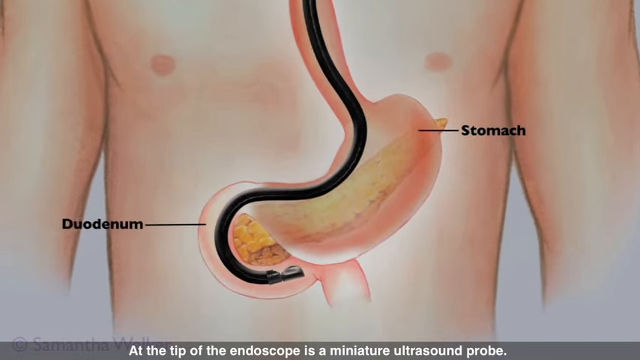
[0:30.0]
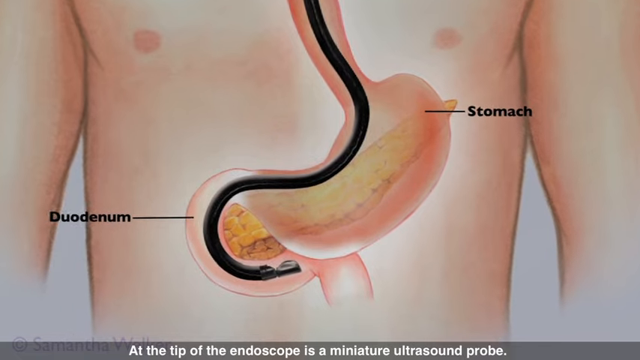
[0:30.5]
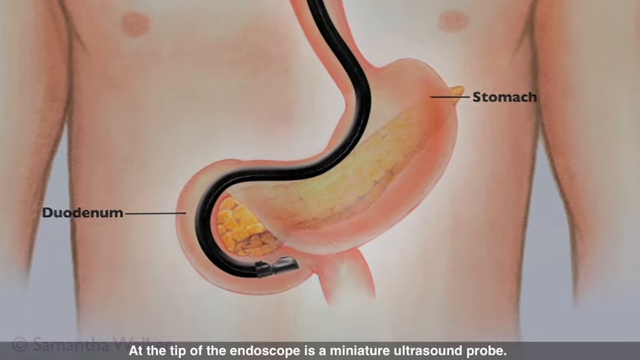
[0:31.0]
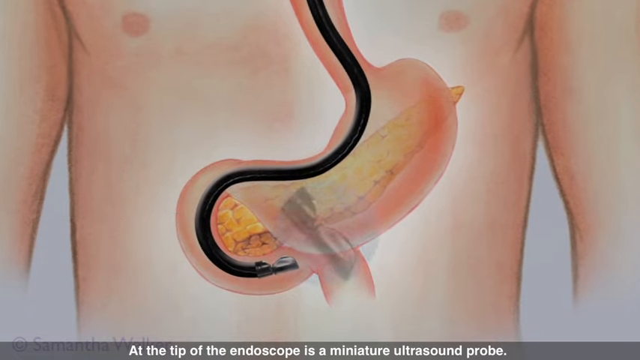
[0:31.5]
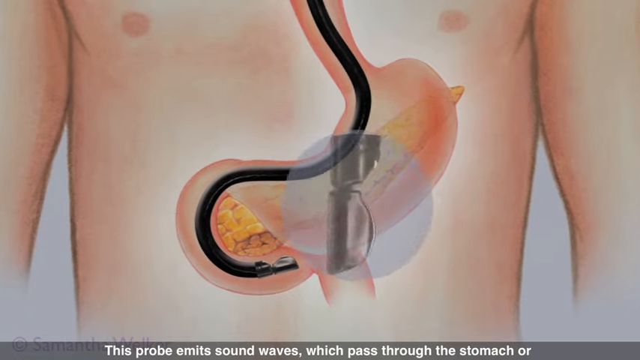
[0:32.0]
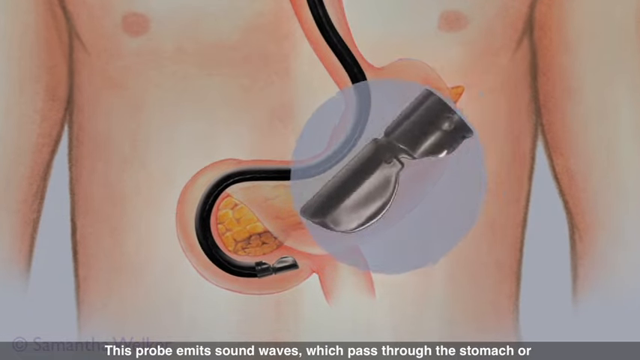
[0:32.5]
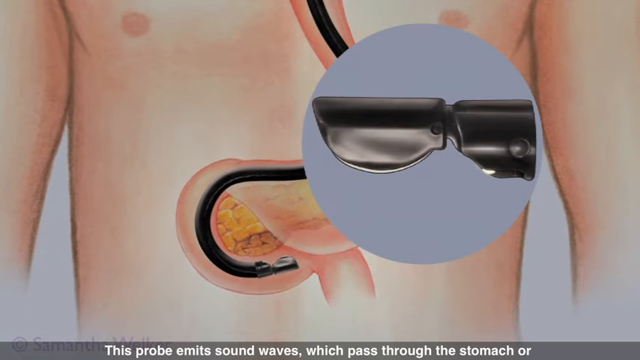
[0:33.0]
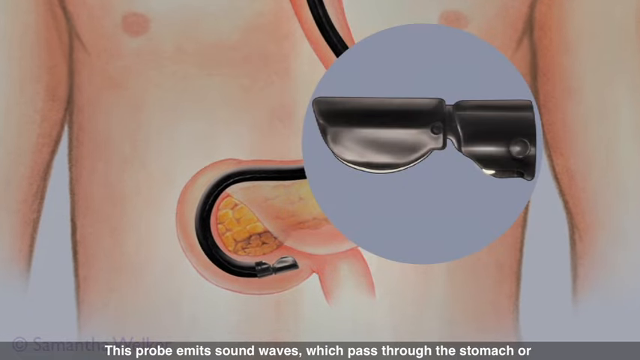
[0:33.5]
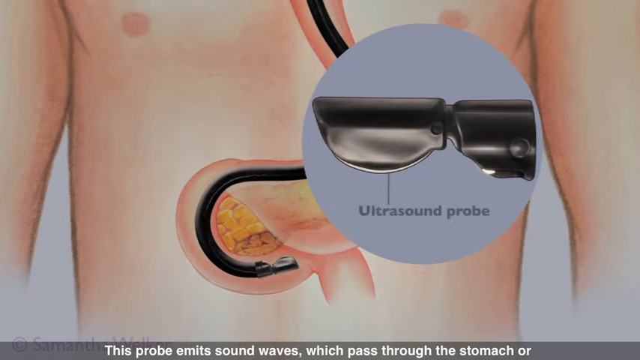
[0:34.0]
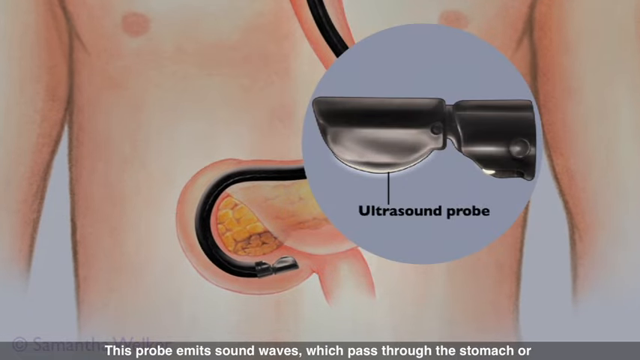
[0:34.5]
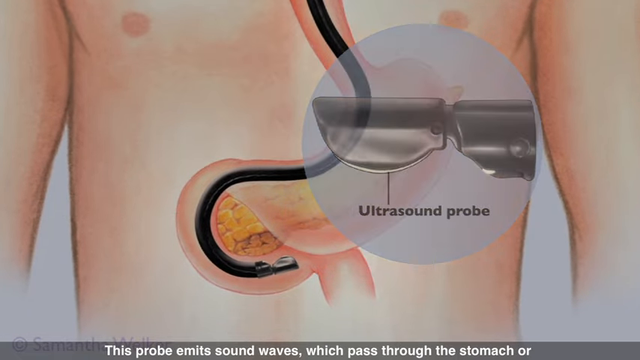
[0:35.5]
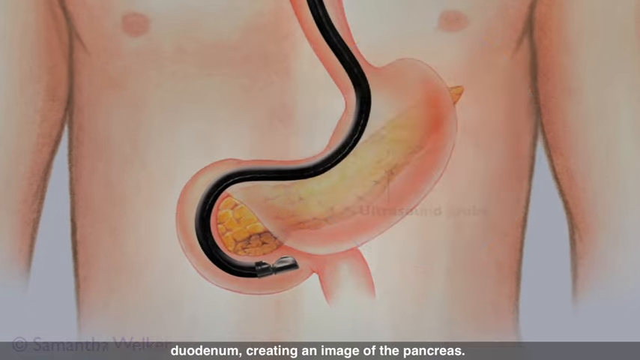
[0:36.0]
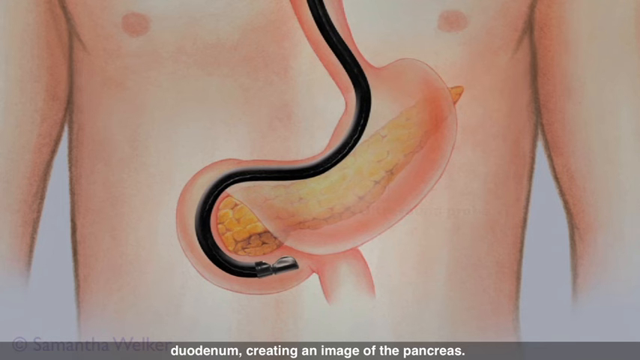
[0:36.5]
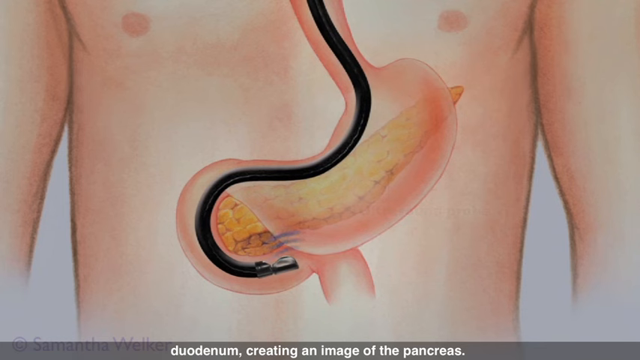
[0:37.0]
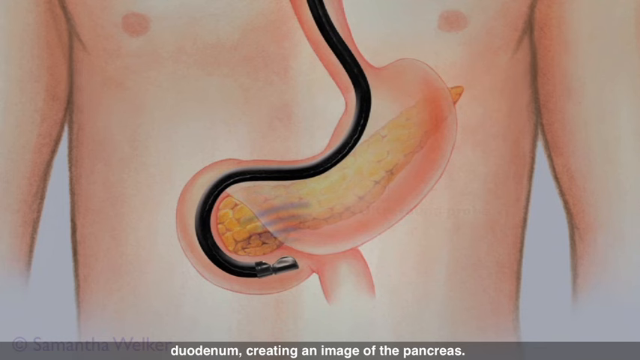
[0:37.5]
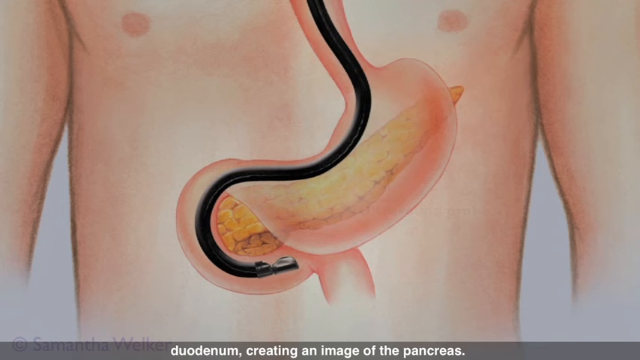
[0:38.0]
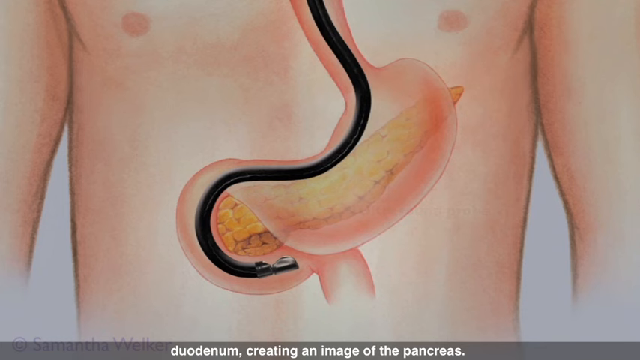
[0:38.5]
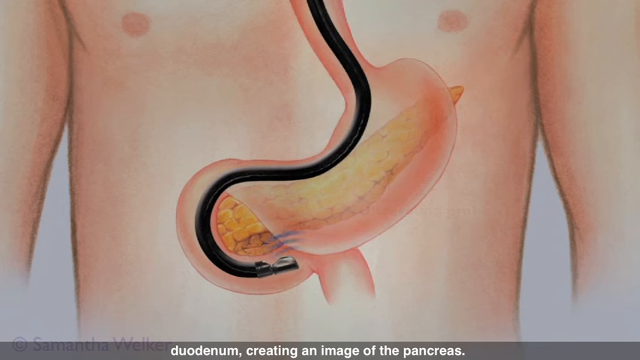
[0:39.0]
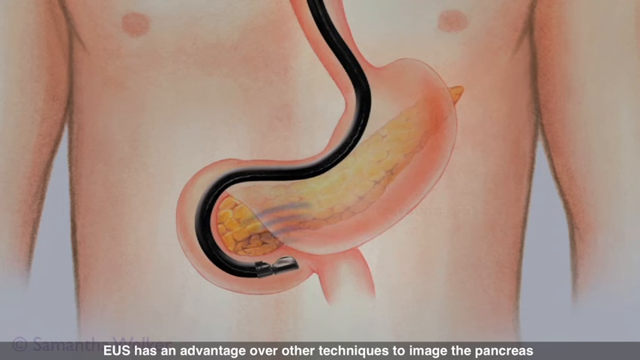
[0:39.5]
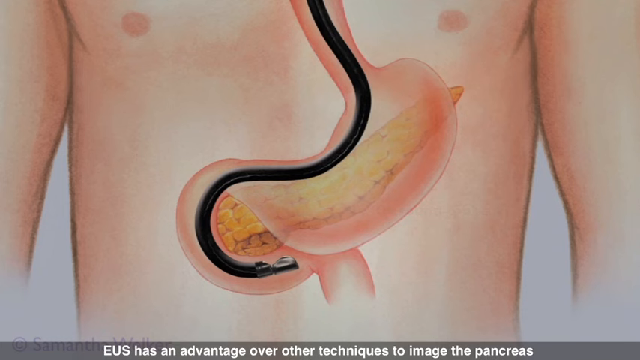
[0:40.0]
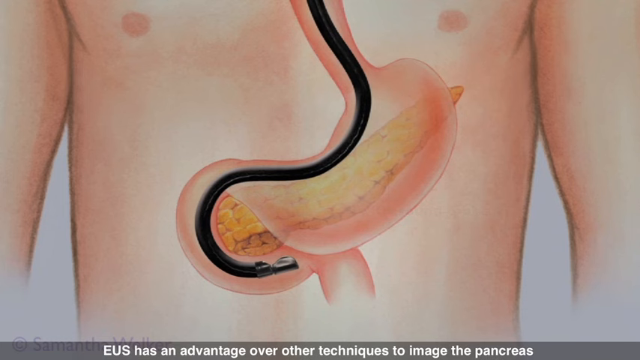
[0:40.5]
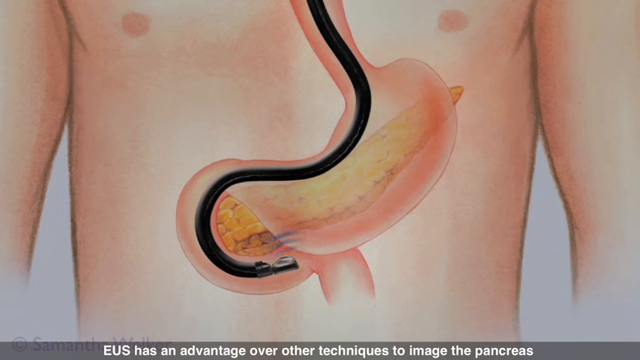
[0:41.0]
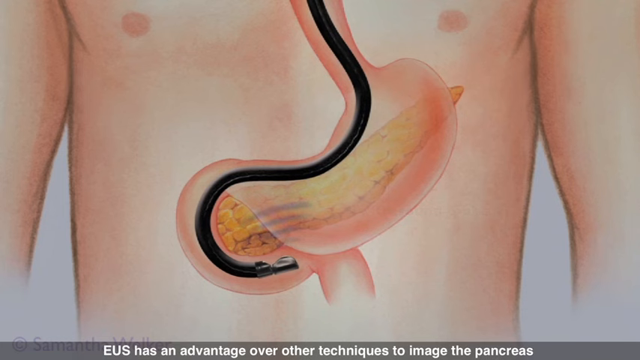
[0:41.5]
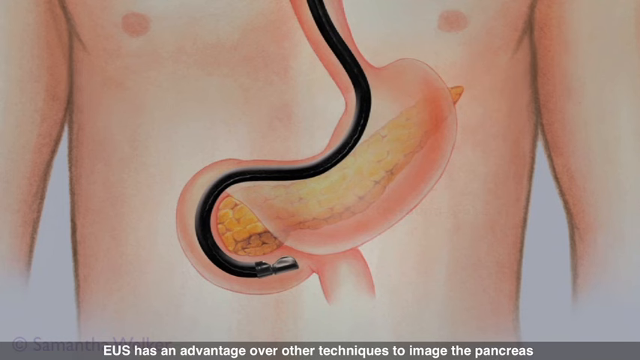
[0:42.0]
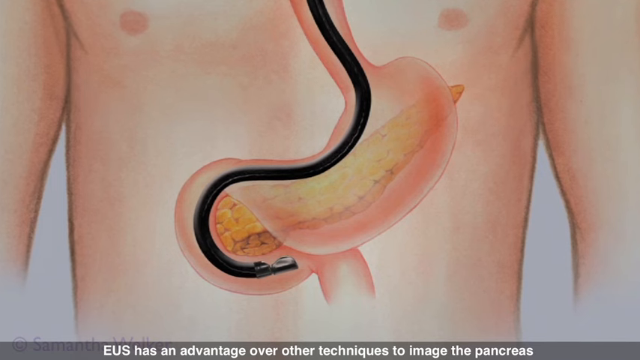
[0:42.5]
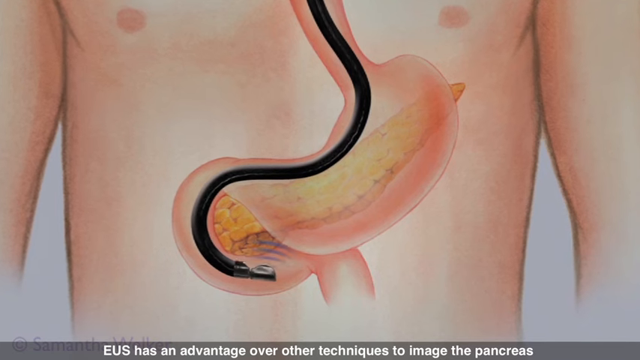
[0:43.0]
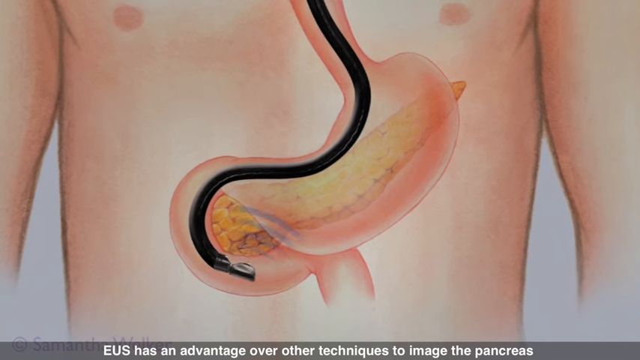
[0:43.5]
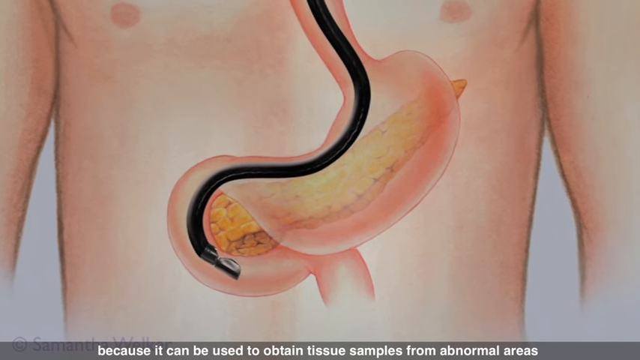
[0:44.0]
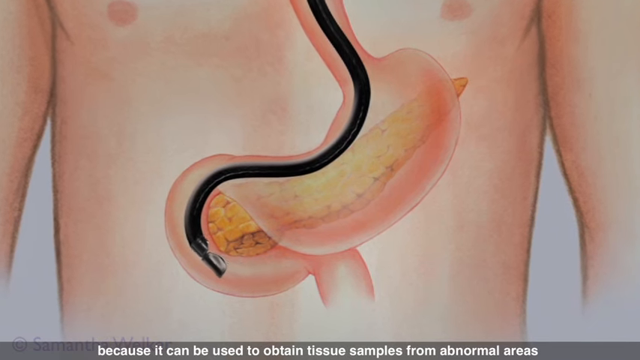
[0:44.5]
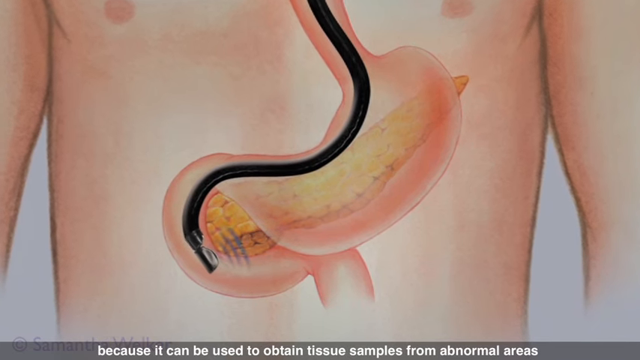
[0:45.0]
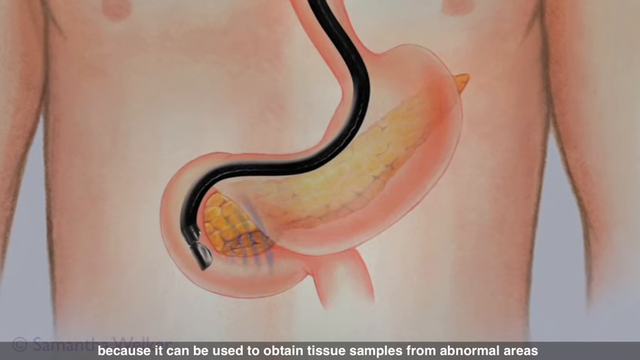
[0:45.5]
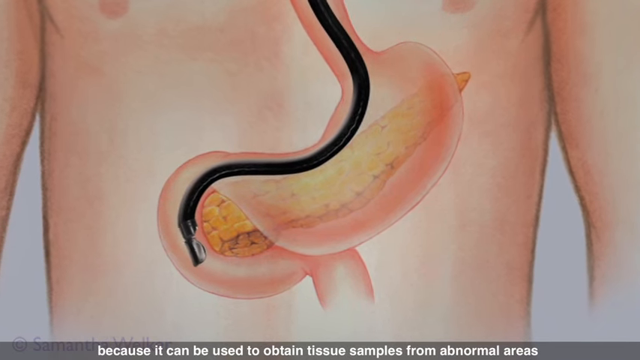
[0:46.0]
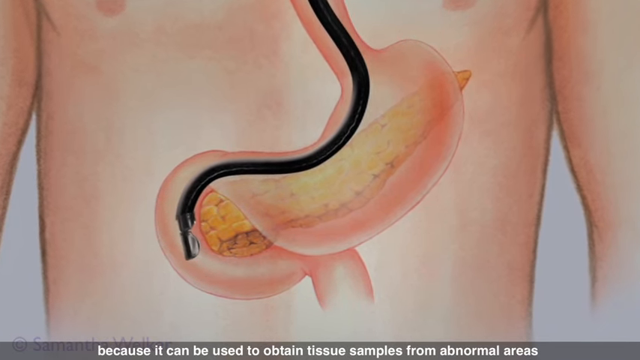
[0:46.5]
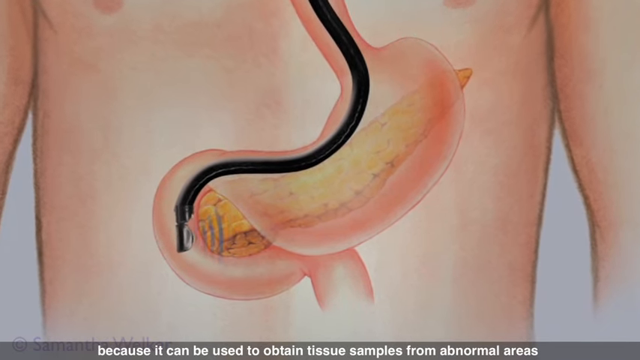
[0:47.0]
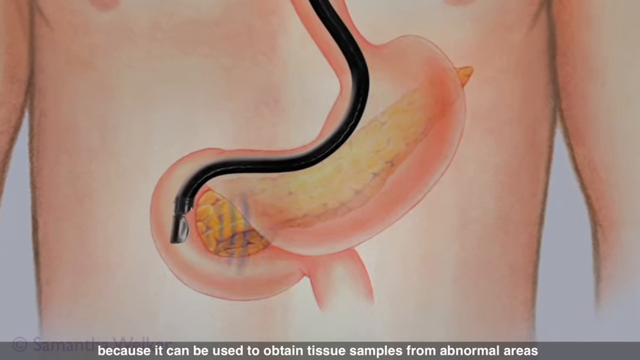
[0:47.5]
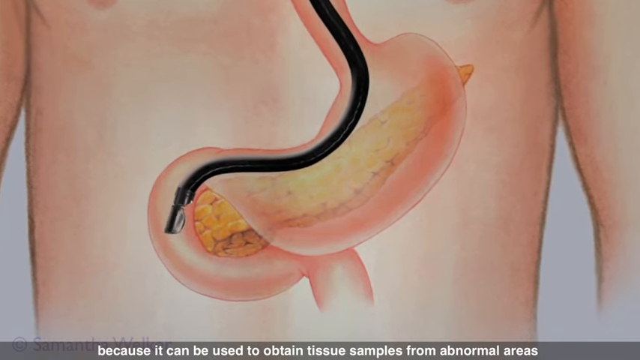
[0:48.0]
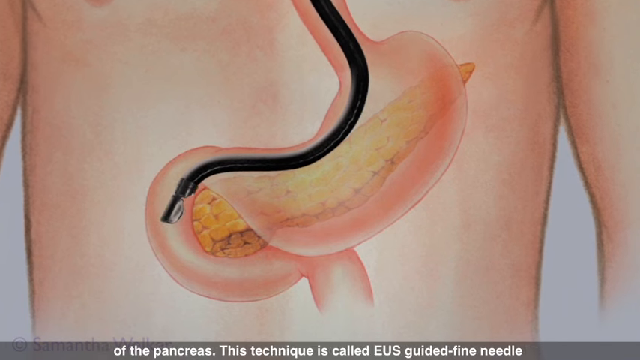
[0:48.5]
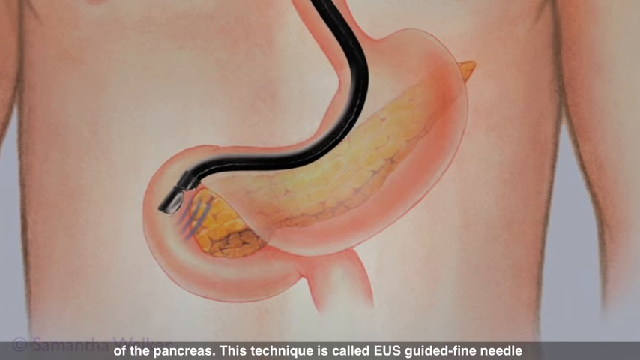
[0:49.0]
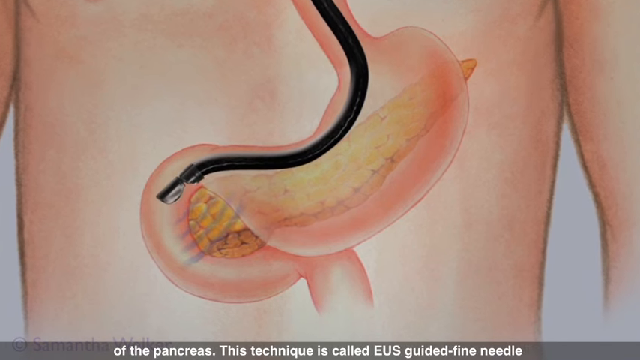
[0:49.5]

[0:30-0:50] The view is now a close-up of the man's chest and torso, from his armpits down to his waist; his face and shoulders are not visible. His arms are down at his sides, and his nipples are visible. The main focus is his digestive tract, with the endoscope inside it. The stomach is labeled with the word "stomach" and a line pointing to it, and the duodenum is labeled with a line pointing to it. The bottom portion of the image seems to show the upper digestive tract and a bit of the lower digestive tract. The view then moves closer, and the ultrasound probe enters the screen; the probe is black and is within a periwinkle circle. The probe inside the man's body emits waves, shown as blue squiggly lines rising up and away from its tip.